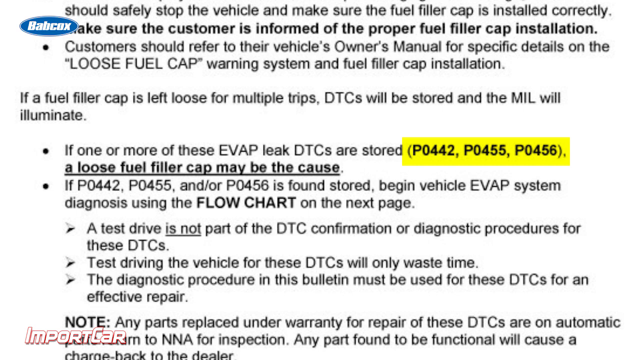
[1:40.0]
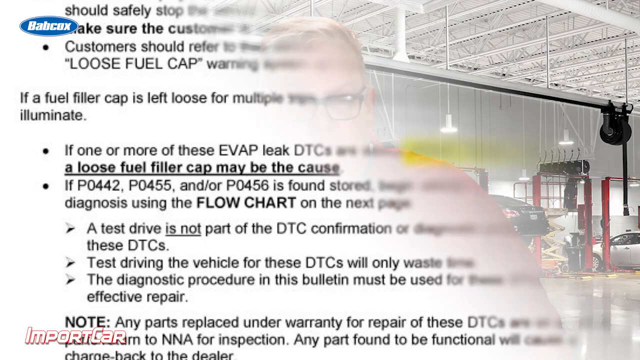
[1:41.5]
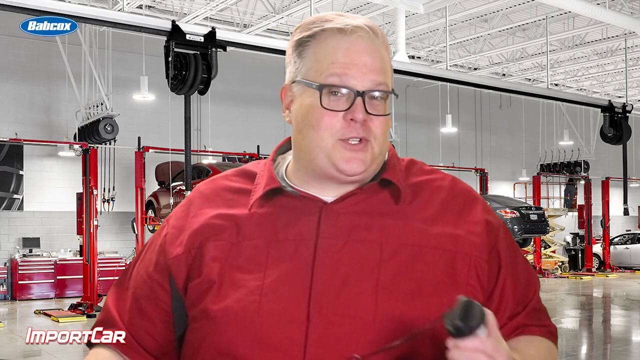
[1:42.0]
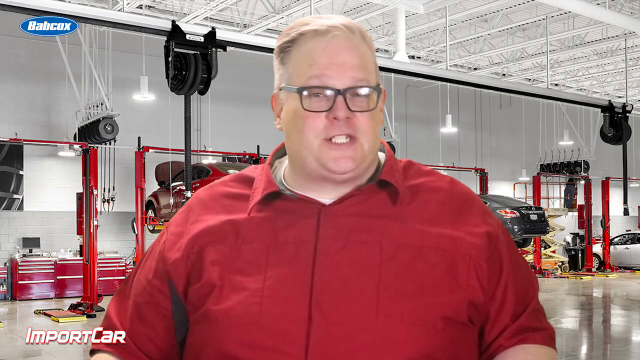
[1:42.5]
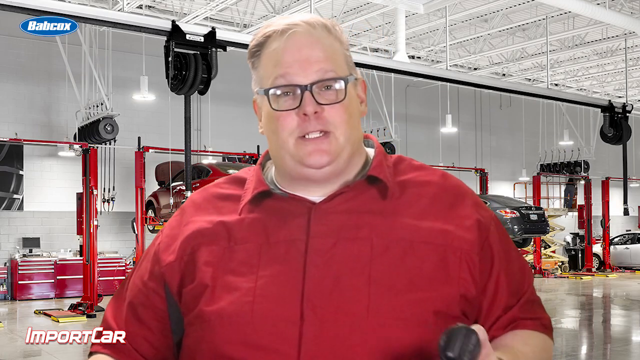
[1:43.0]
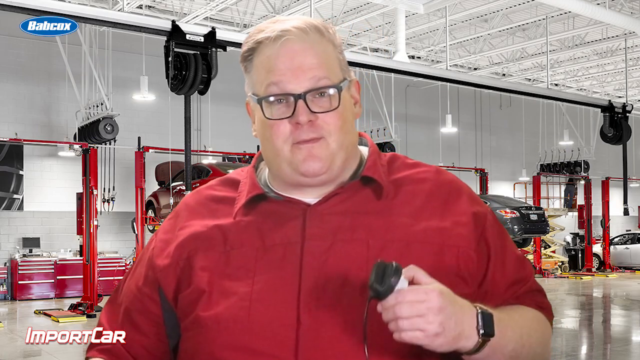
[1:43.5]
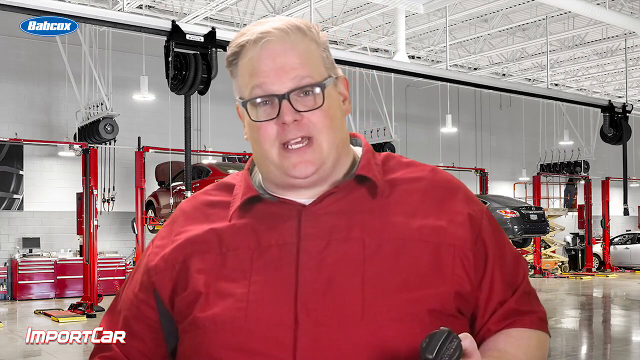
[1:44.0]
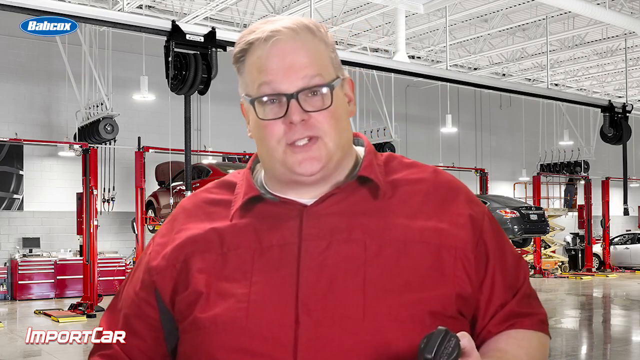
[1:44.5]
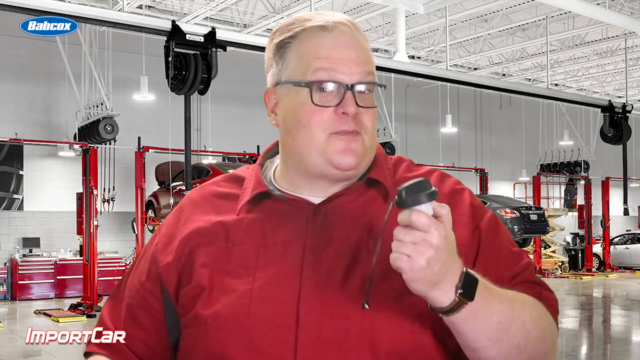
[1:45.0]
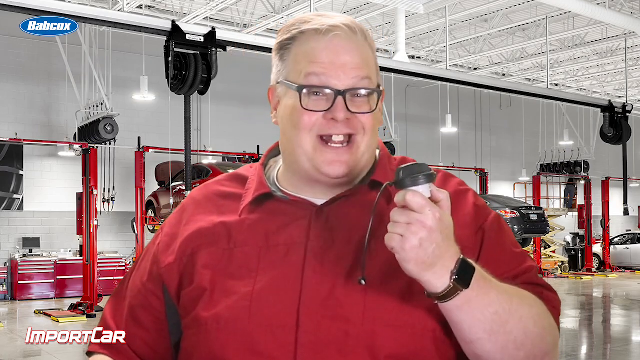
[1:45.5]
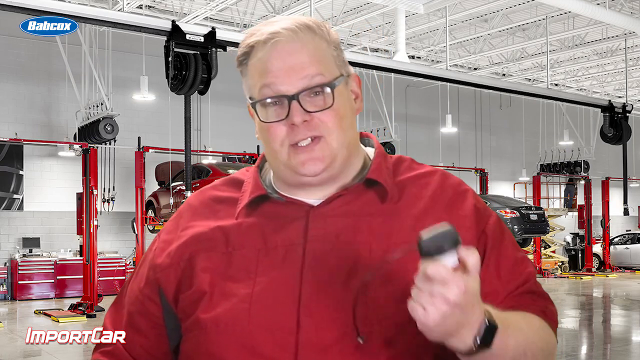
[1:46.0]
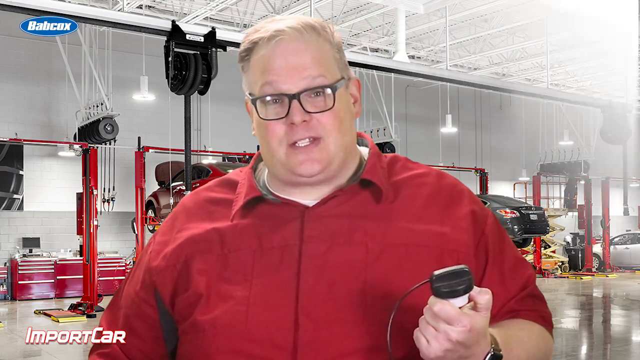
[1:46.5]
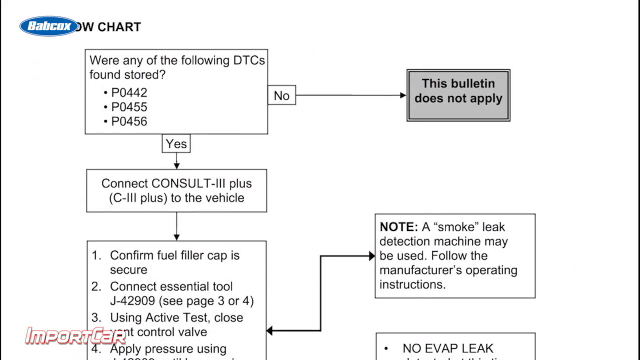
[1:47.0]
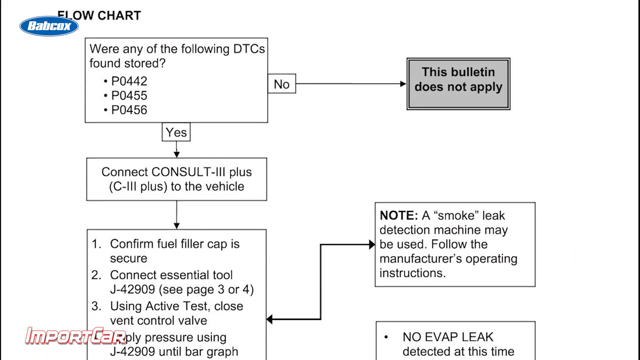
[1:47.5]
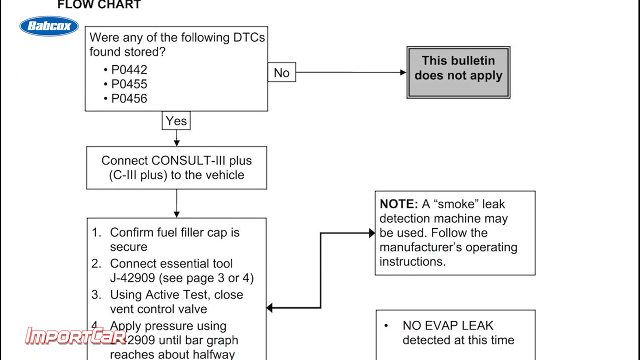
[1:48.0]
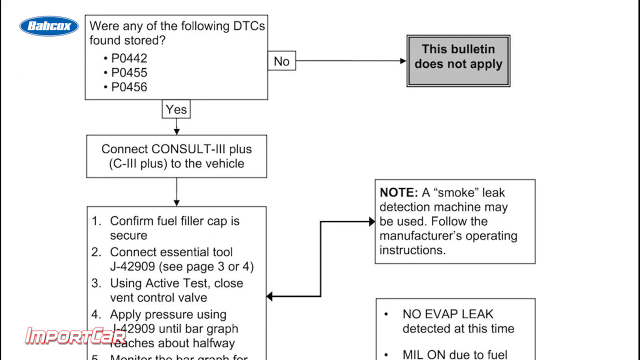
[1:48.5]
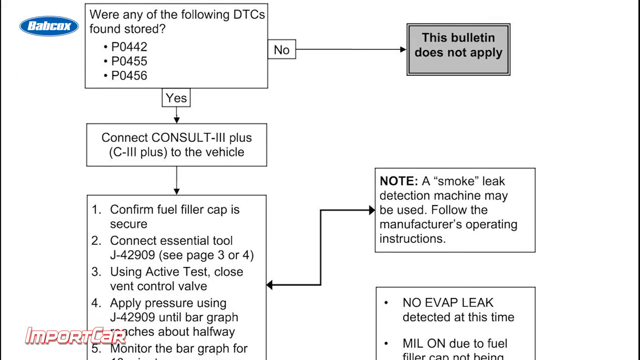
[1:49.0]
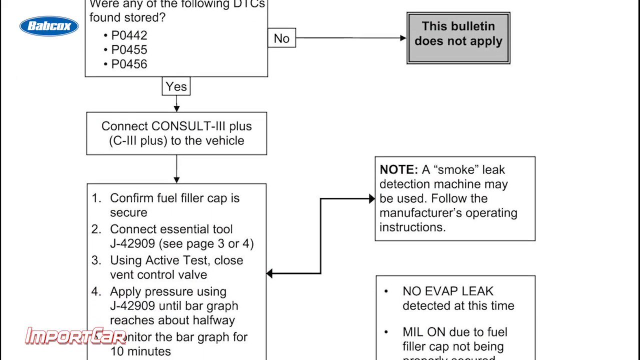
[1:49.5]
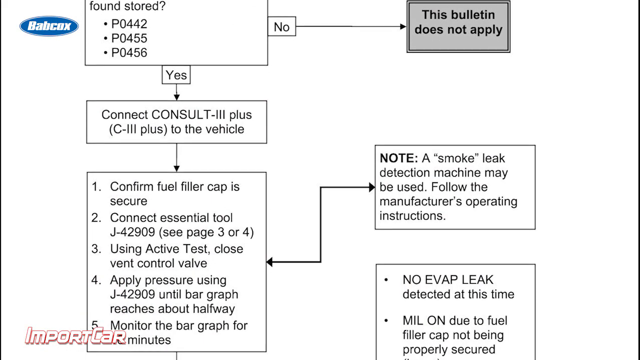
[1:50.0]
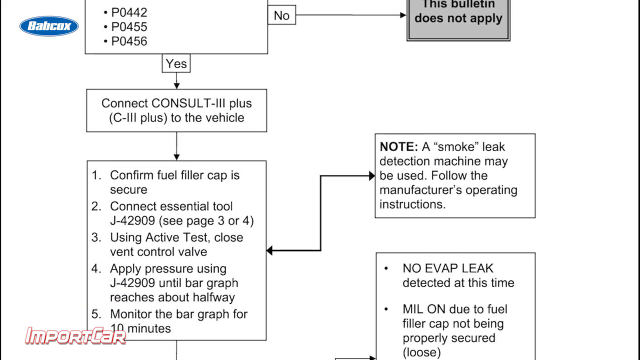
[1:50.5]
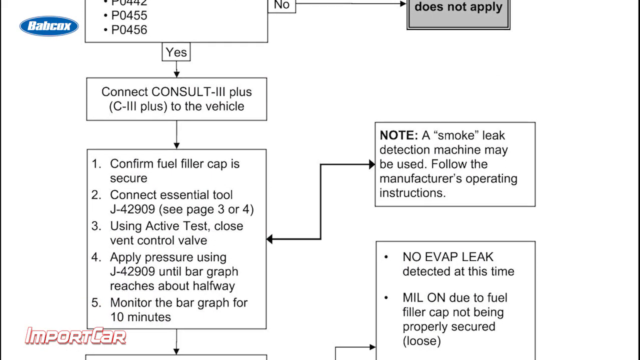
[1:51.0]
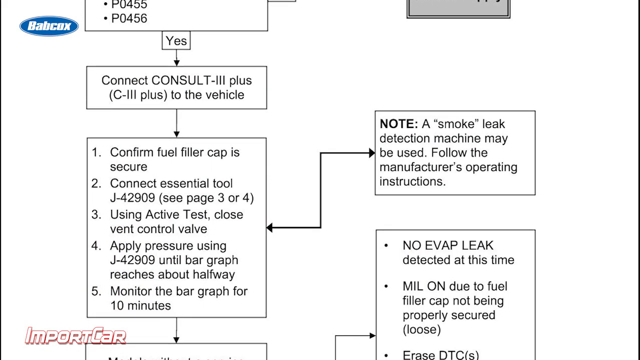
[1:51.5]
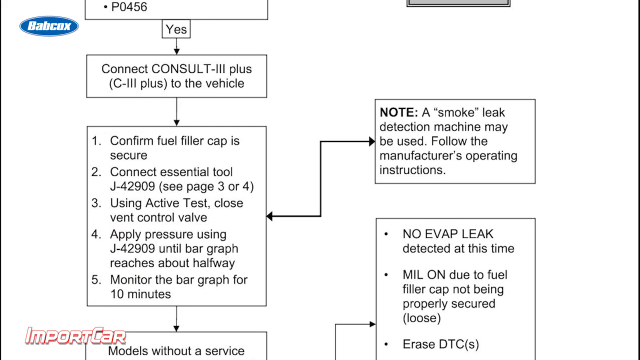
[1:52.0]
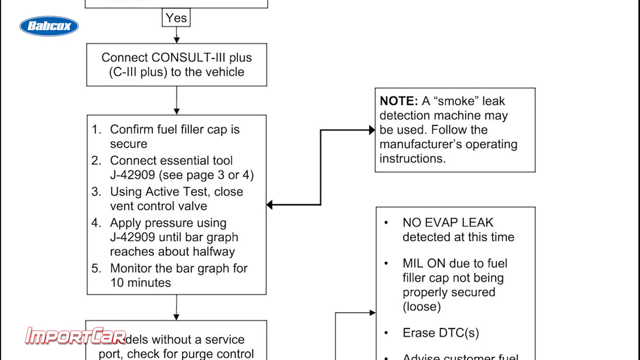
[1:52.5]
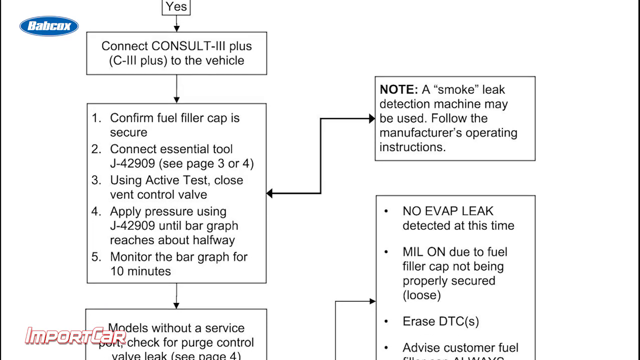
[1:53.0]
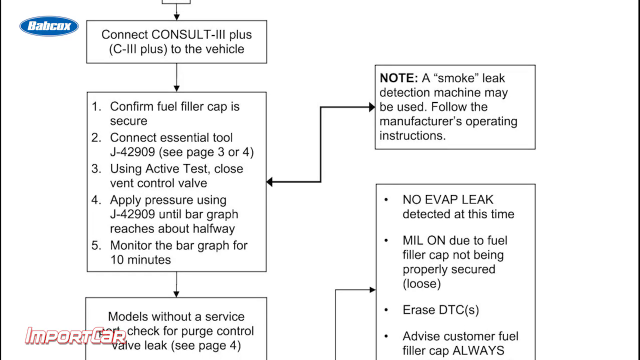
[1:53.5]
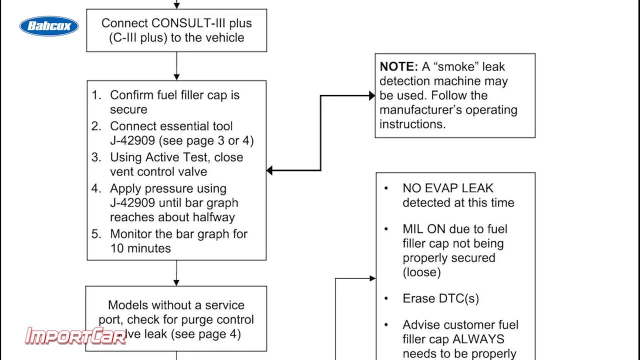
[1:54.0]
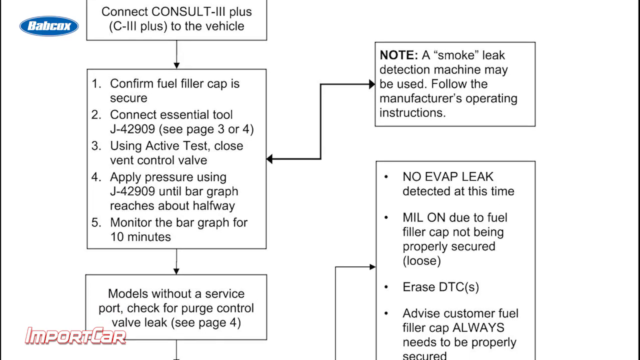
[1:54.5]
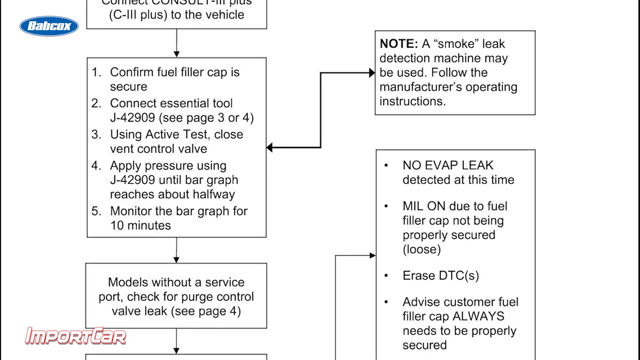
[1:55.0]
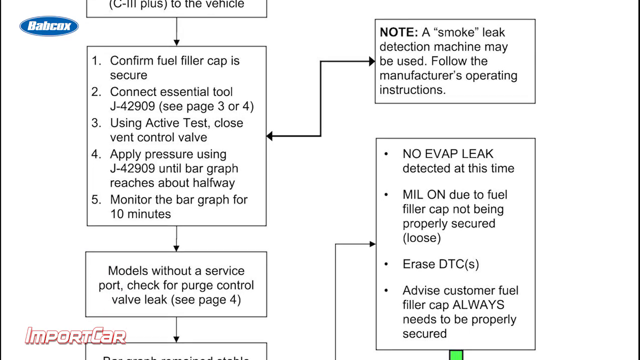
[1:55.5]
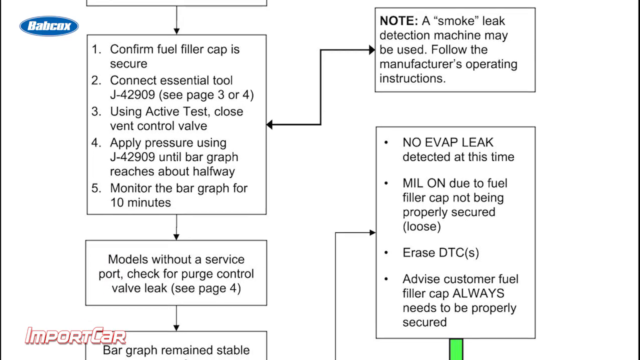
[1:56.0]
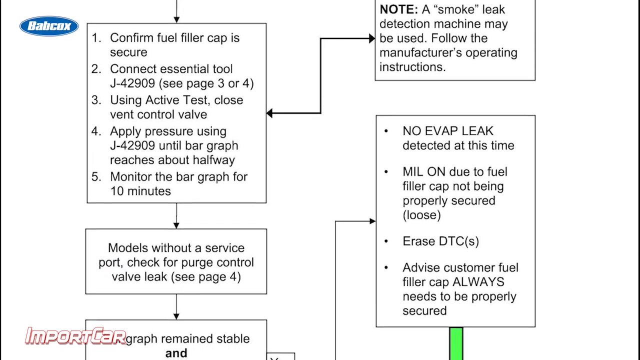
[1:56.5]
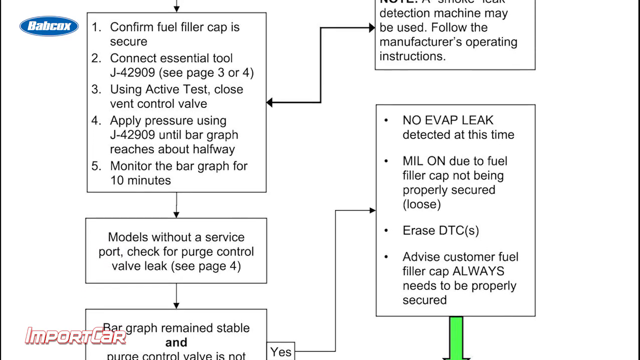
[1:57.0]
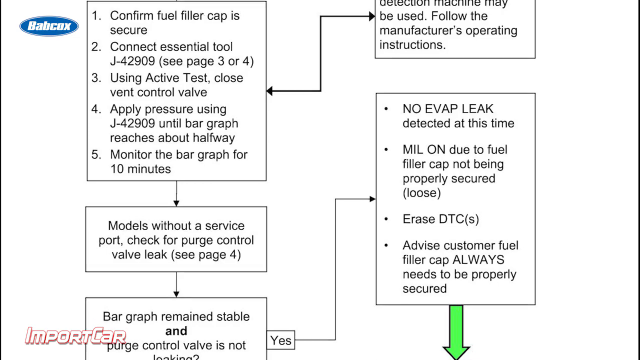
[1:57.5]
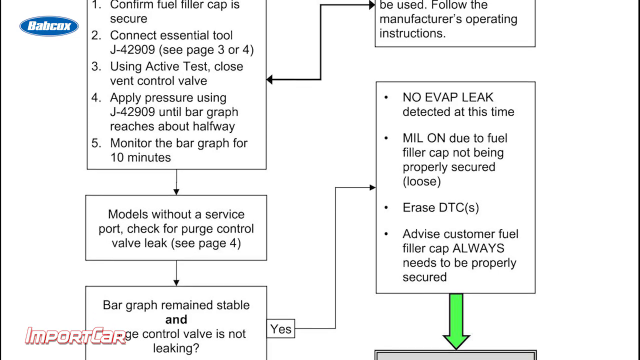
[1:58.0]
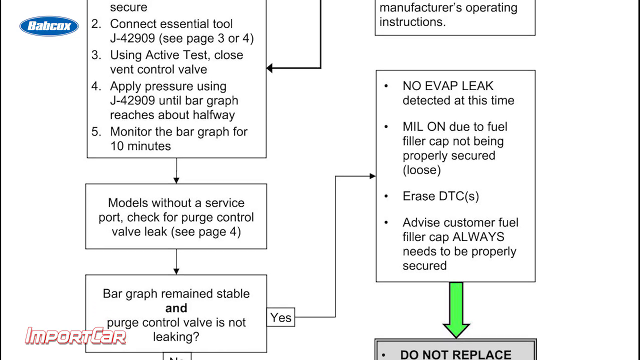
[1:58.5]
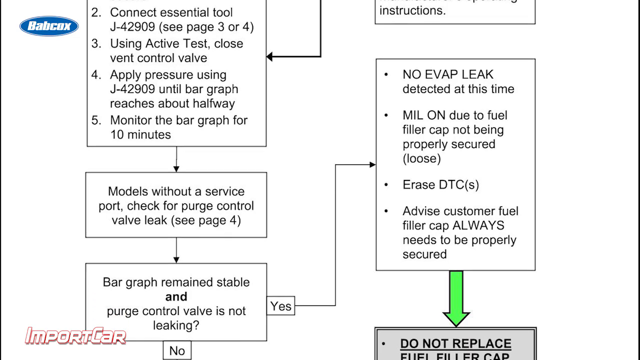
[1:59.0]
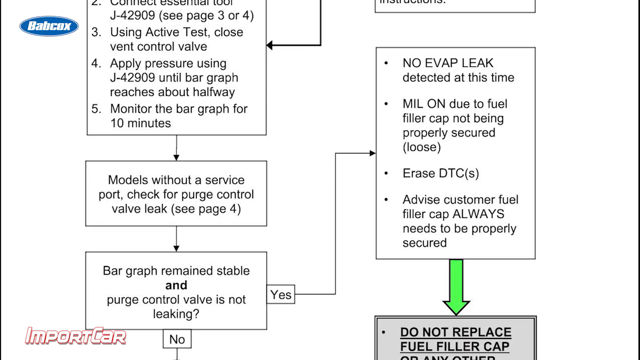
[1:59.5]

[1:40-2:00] Instructions are shown: one should safely stop to make sure the filler cap is installed correctly; the customer should be informed of the proper fuel filler cap installation; customers should refer to their vehicle's owner manual for specific details on the loose fuel cap warning system and fuel filler cap installation; and if the fuel filler cap is left loose for multiple trips, DTCs will be stored and the MIL will illuminate. The video then returns to the very large white man with glasses and blonde hair as he goes over more instructions, which mention that a machine may be used to detect a leak in the system.